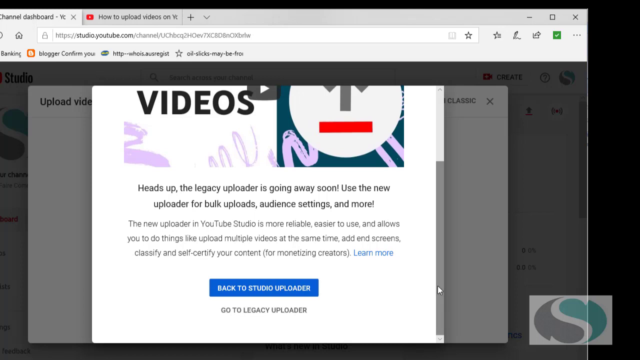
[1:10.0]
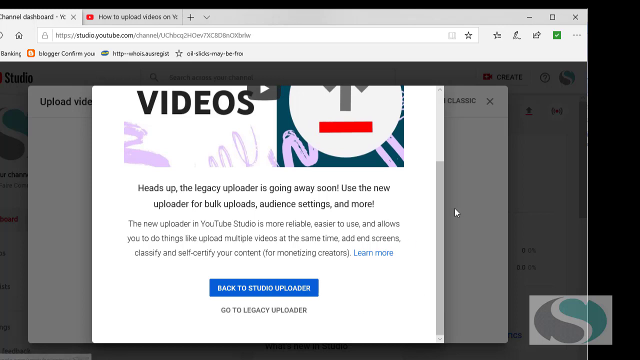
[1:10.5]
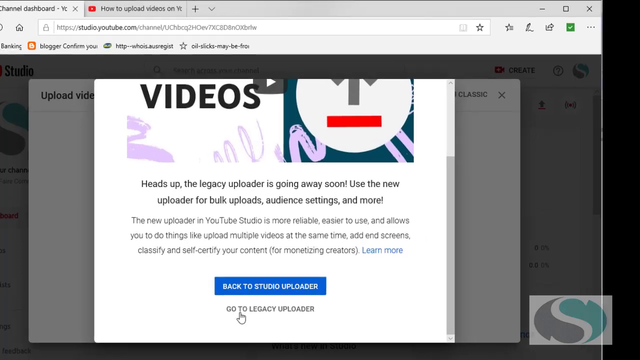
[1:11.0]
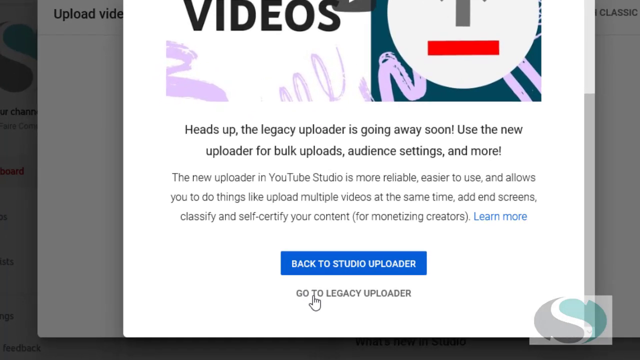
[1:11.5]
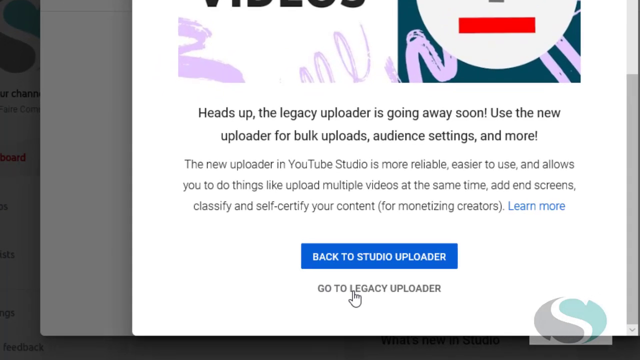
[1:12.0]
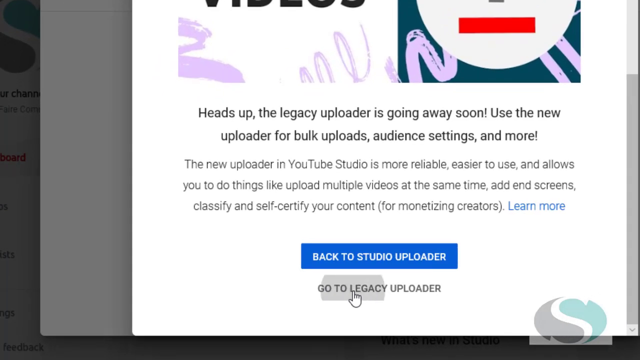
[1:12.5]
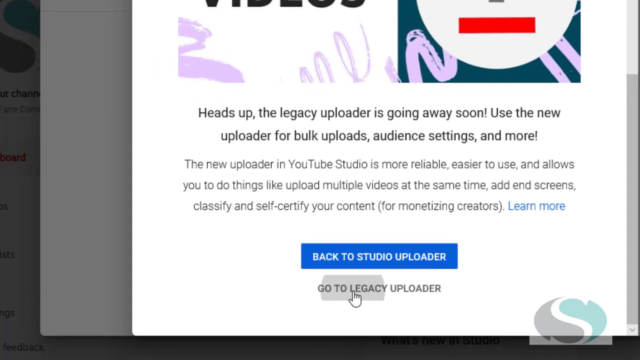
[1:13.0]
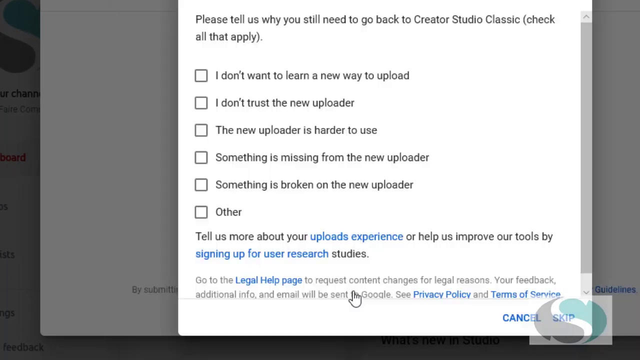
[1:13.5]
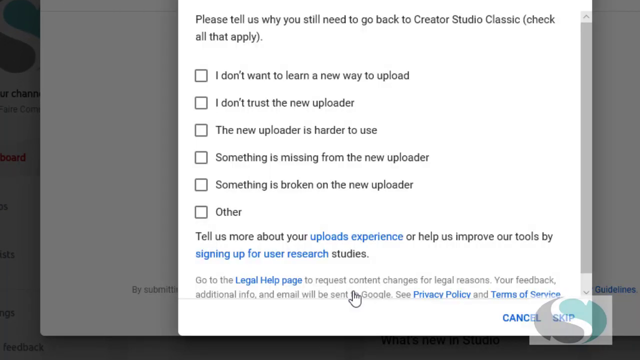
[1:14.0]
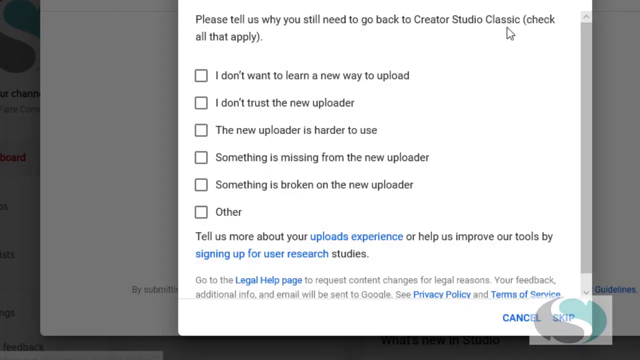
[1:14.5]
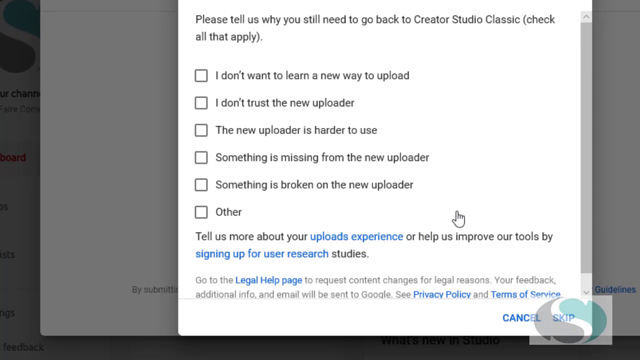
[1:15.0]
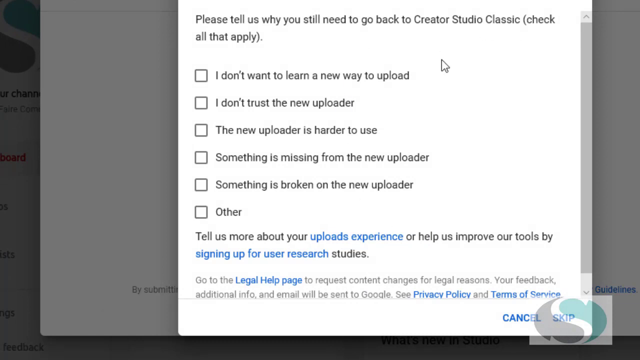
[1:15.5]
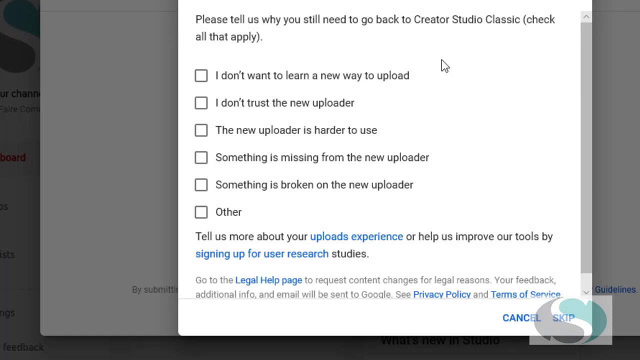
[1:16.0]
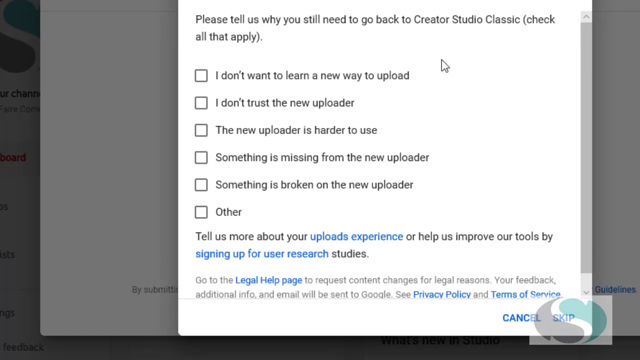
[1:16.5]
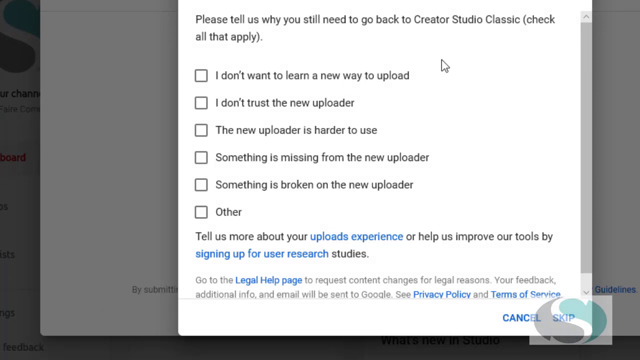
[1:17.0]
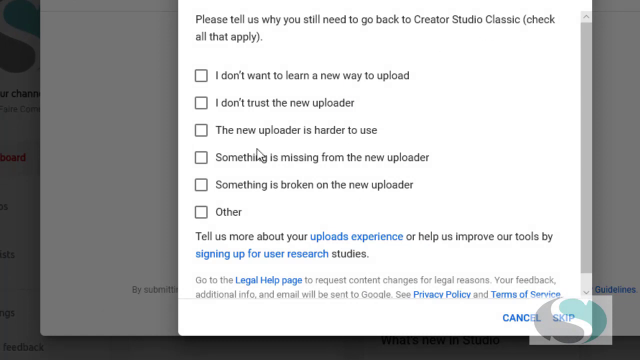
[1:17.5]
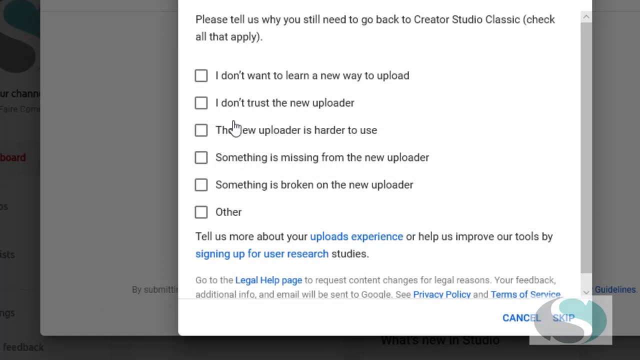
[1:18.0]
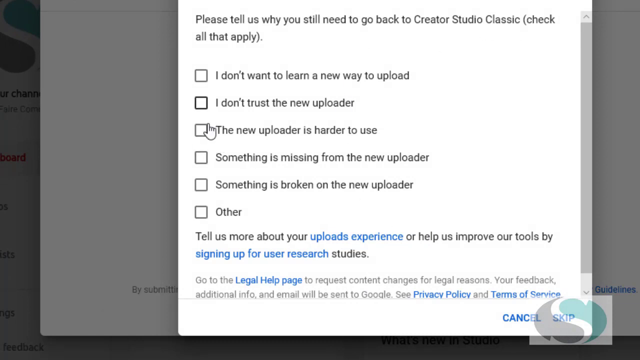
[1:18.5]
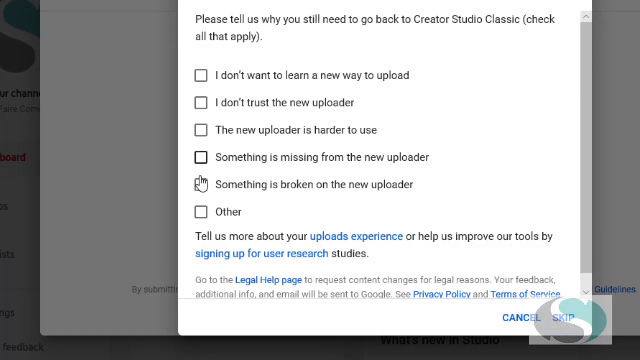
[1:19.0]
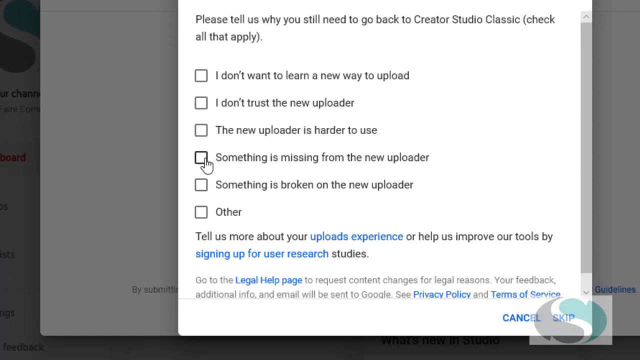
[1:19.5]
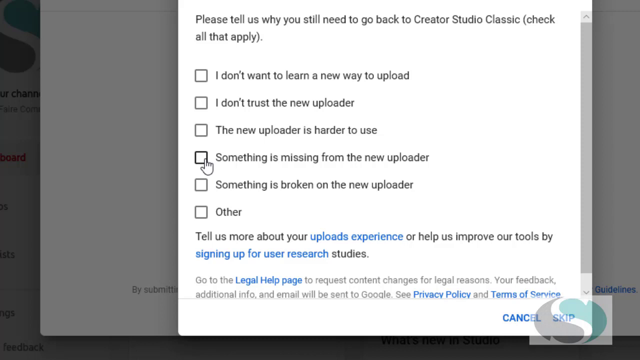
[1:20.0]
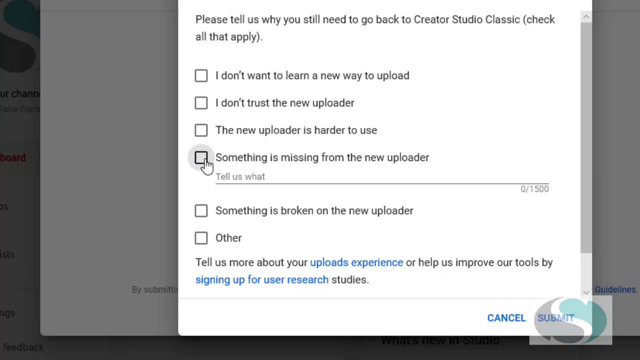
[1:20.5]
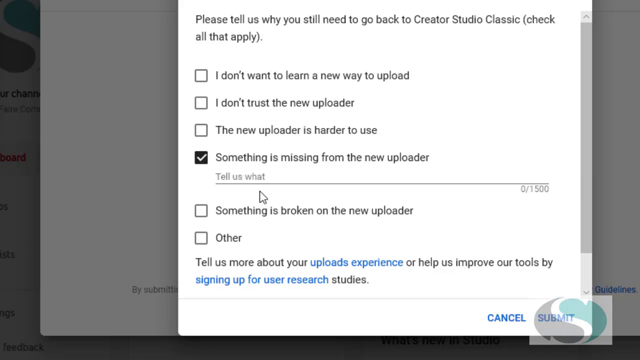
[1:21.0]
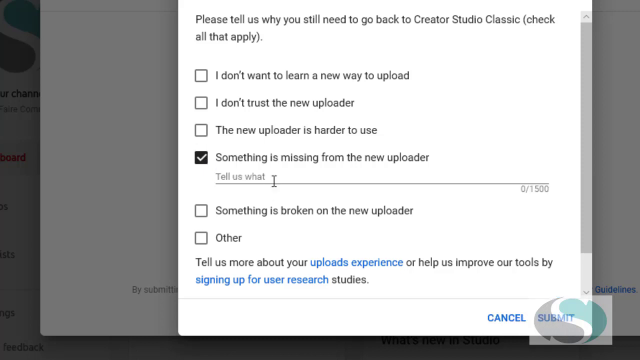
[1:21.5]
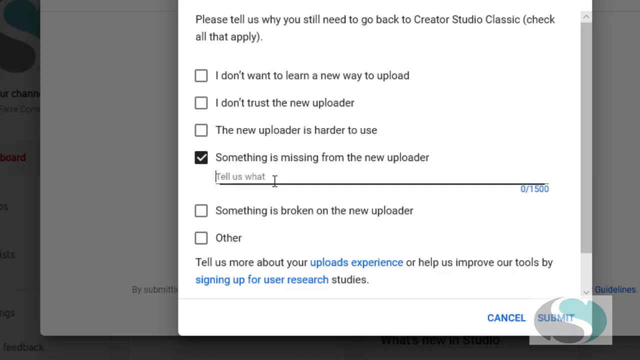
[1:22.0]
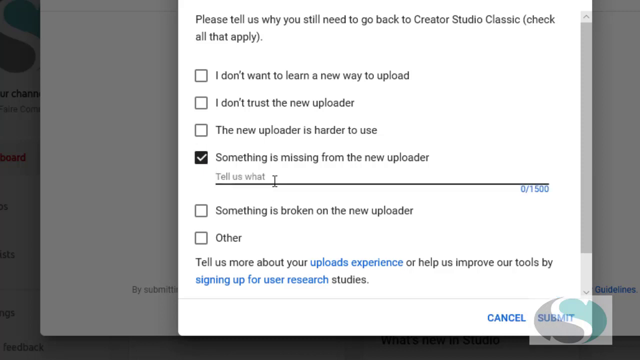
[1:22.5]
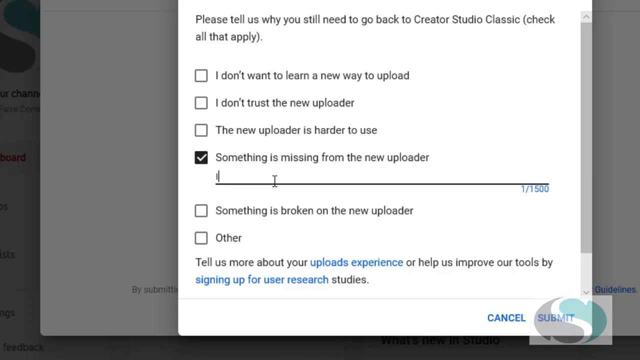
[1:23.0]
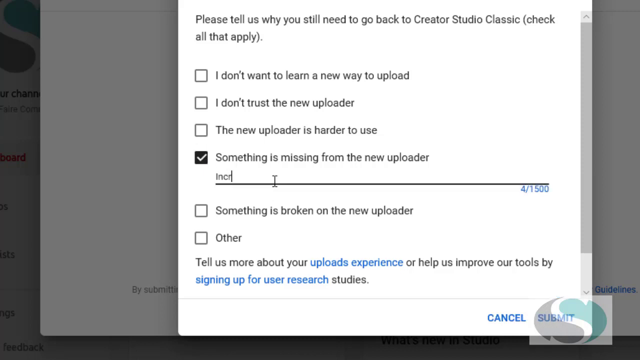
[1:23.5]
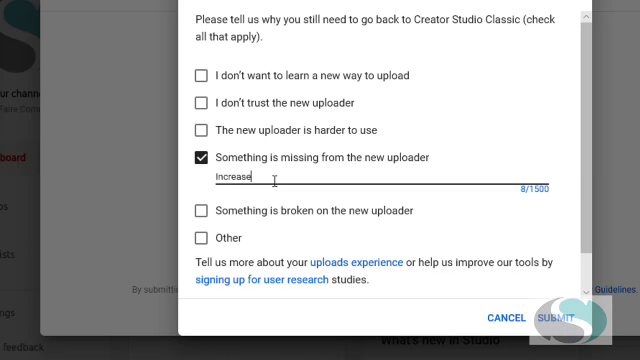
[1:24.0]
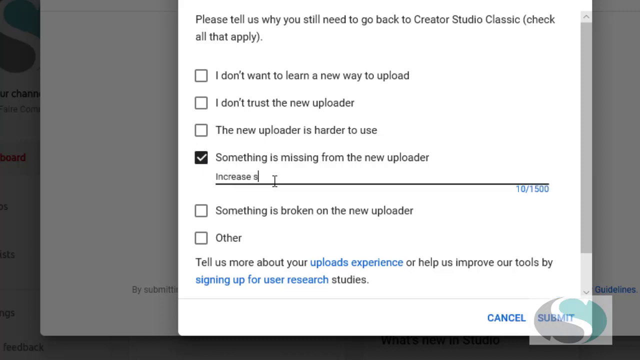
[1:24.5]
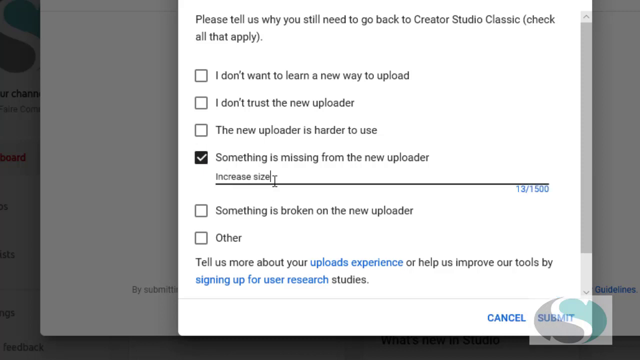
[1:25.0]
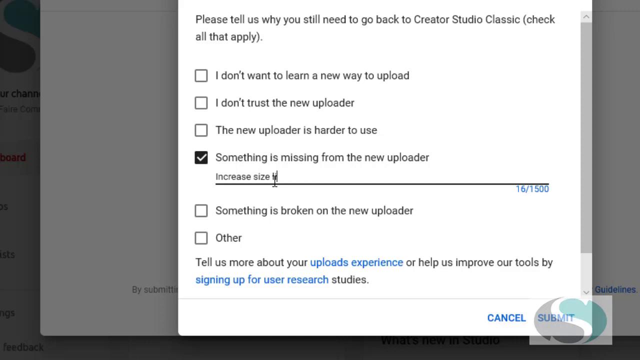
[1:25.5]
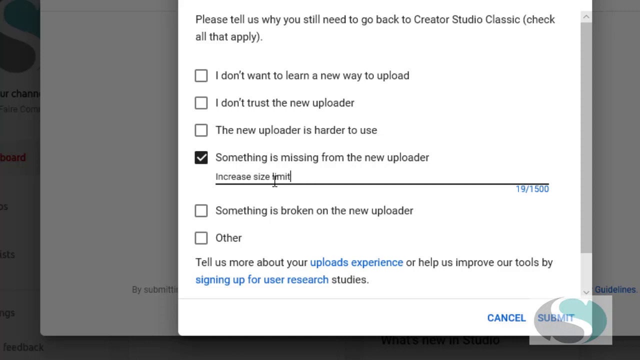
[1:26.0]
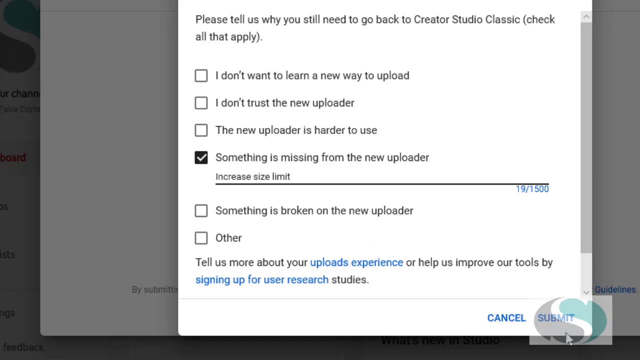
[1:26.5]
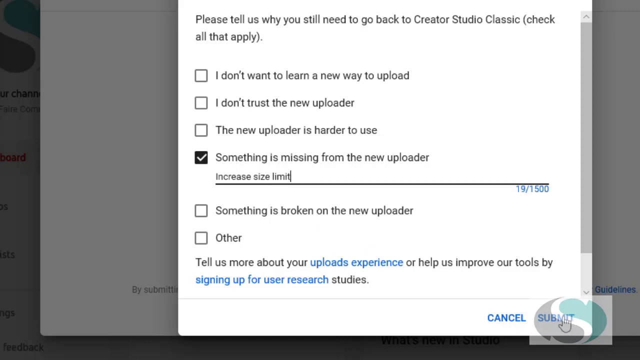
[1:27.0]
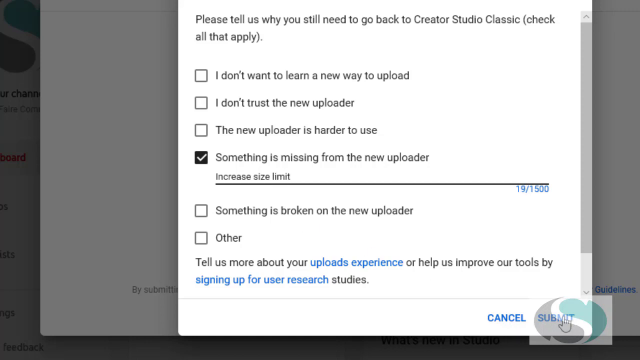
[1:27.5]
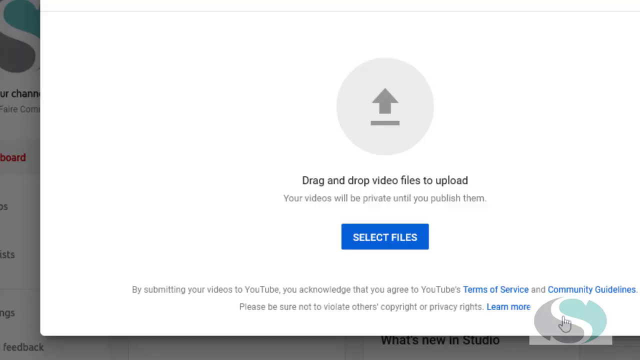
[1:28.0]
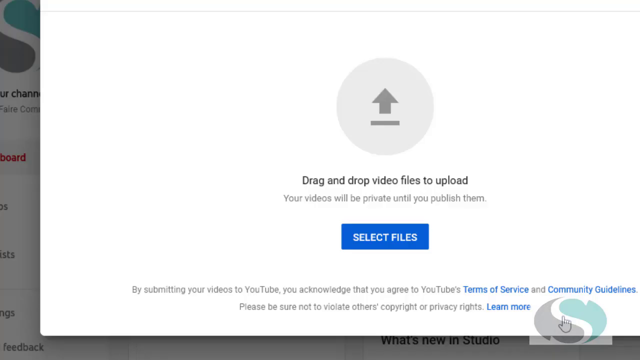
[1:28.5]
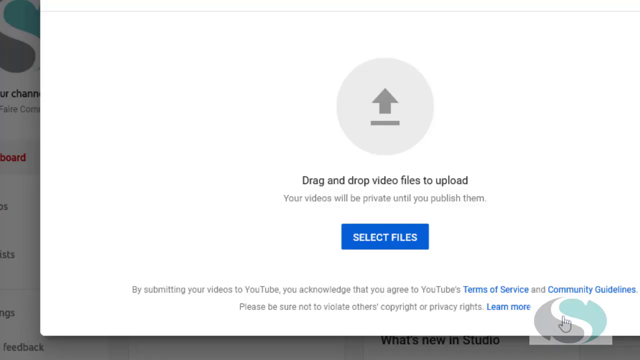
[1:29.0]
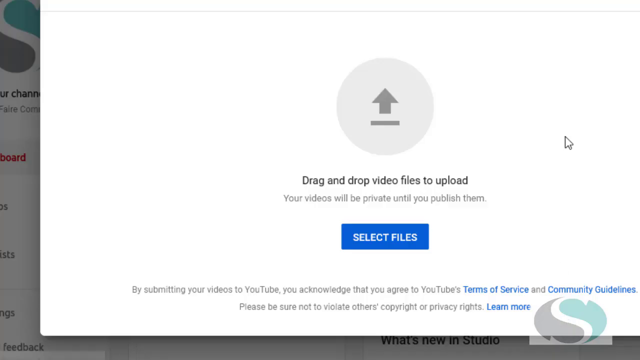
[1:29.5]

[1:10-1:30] A window is open, seemingly a second overlay, concerning uploading videos. It reads "heads up, the legacy uploader is going away soon. Use the new uploader for bulk uploads, audience settings, and more," and "the new uploader in YouTube Studio is more reliable, easier to use, and allows you to do things like upload multiple videos at the same time," along with mentions of end screens and classifying and self-certifying content for monetizing creators, and a "learn more" link. There is also an option beginning "go to the legacy," apparently followed by "uploader," which the user clicks very quickly. Another window then appears, apparently asking for a preference: "please tell us why you still need to go back to Creator Studio Classic." The user selects that something is missing from the new uploader, types "increase size limit" on the provided line, and selects that option.